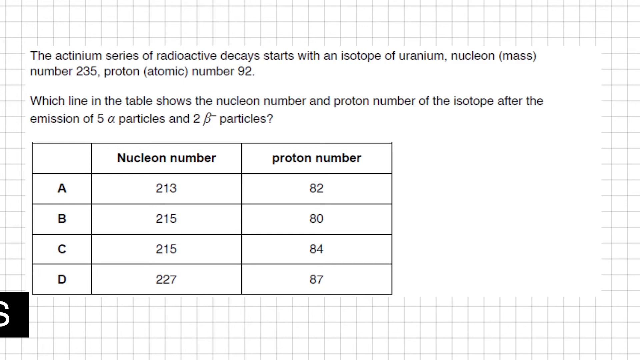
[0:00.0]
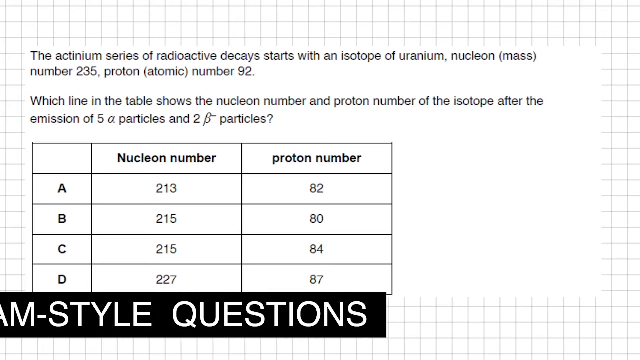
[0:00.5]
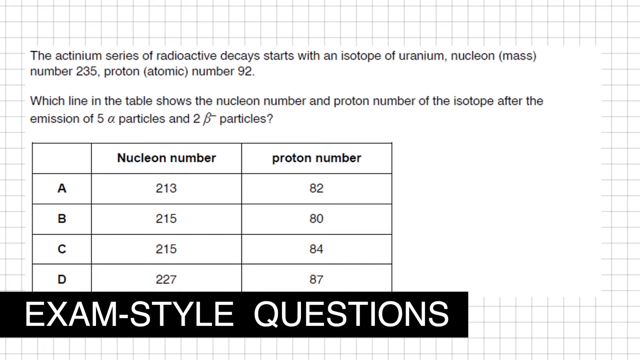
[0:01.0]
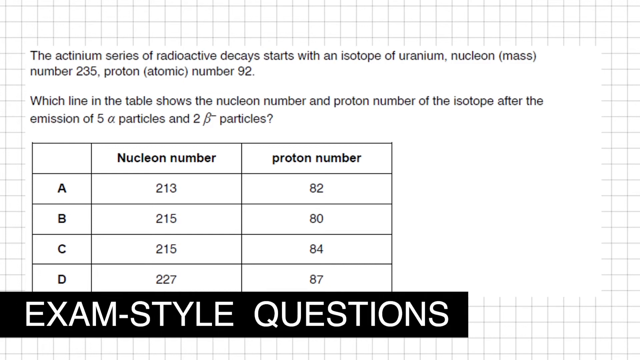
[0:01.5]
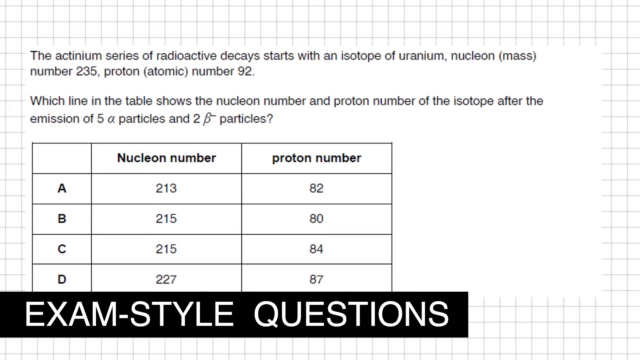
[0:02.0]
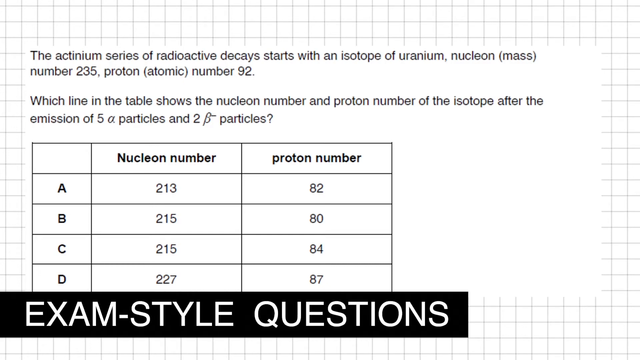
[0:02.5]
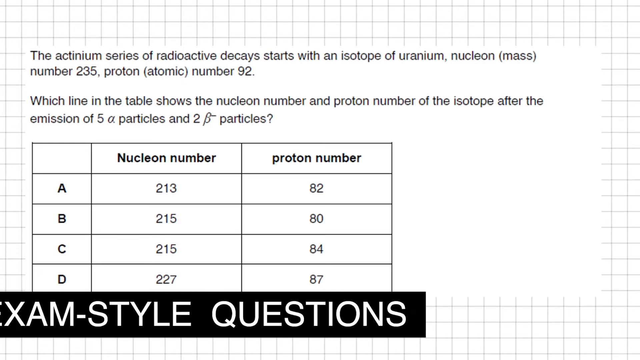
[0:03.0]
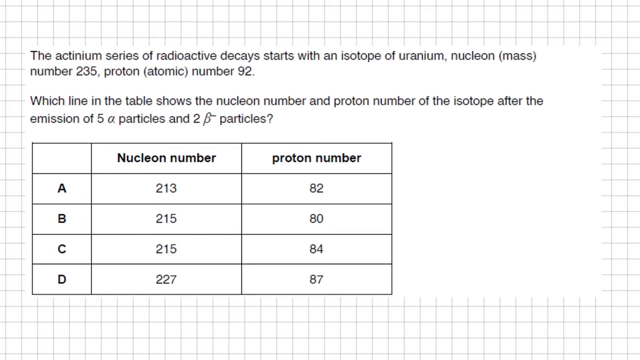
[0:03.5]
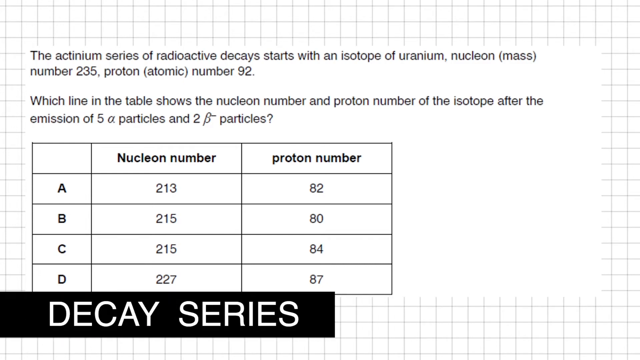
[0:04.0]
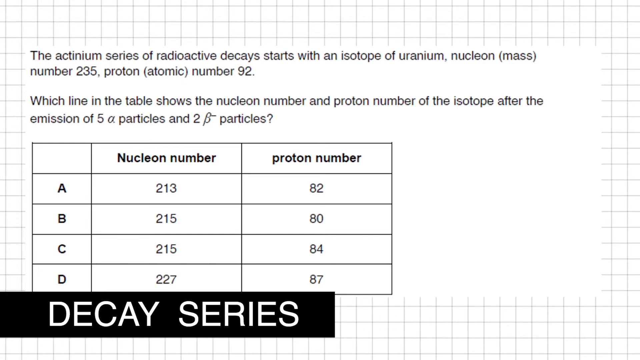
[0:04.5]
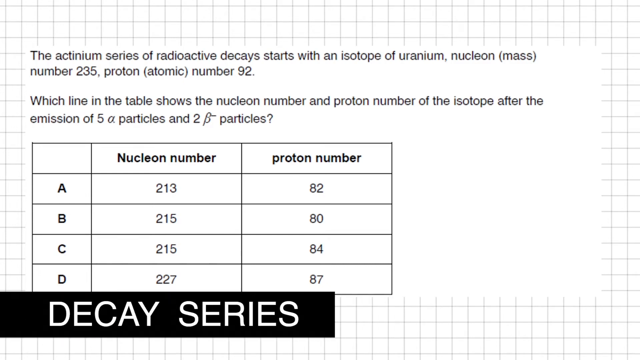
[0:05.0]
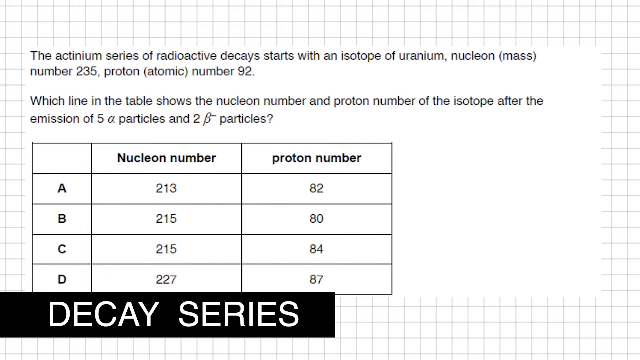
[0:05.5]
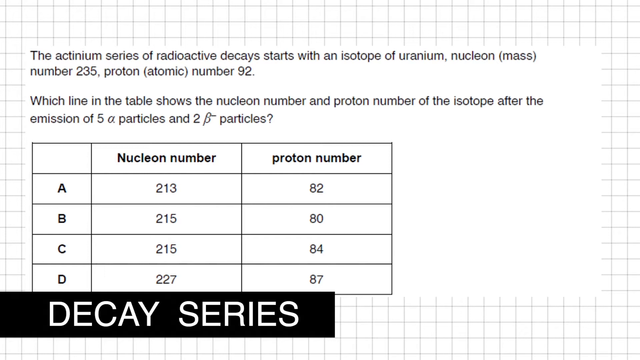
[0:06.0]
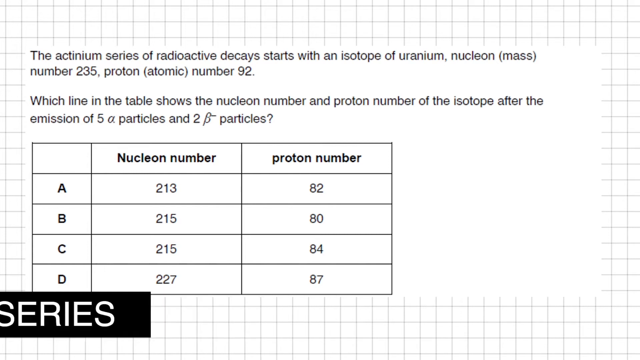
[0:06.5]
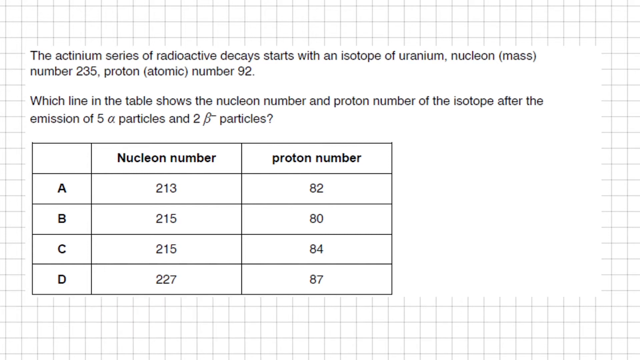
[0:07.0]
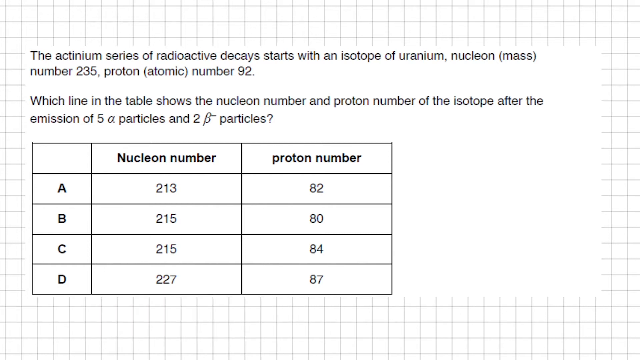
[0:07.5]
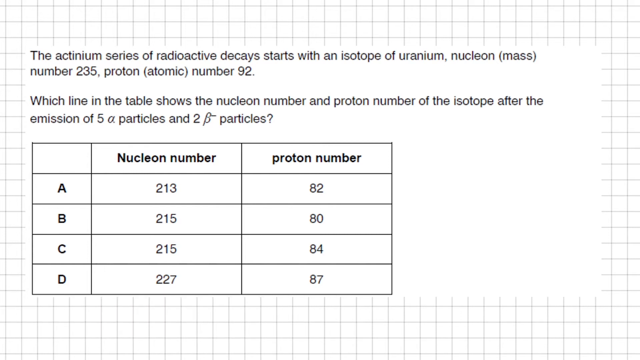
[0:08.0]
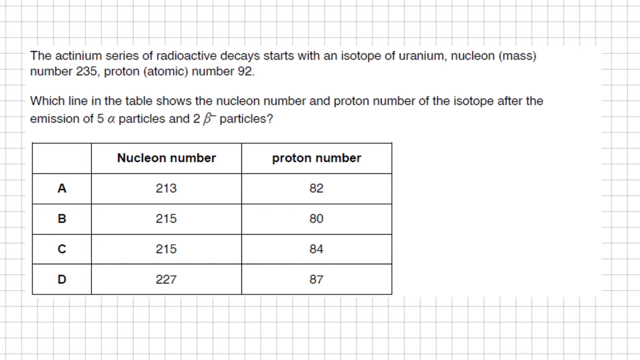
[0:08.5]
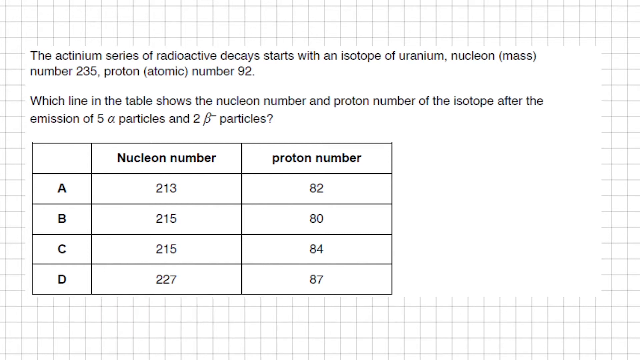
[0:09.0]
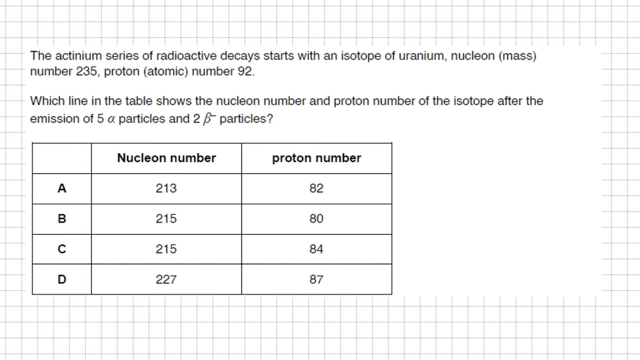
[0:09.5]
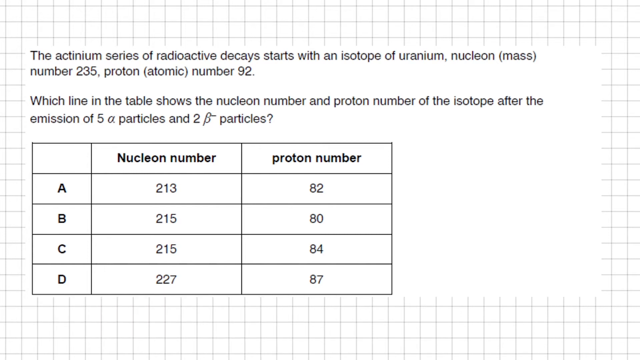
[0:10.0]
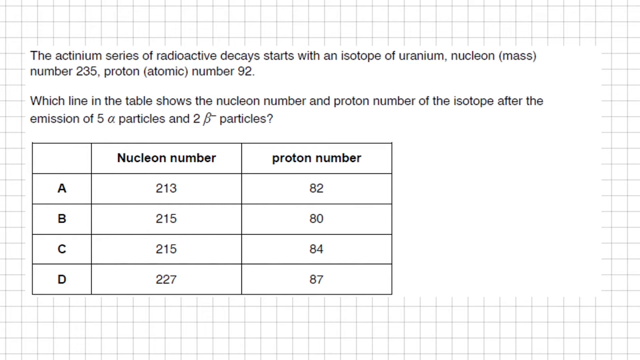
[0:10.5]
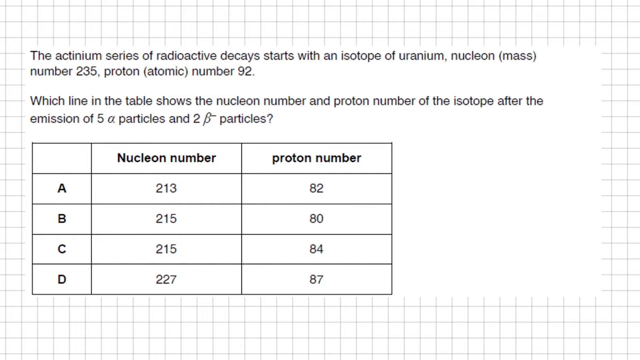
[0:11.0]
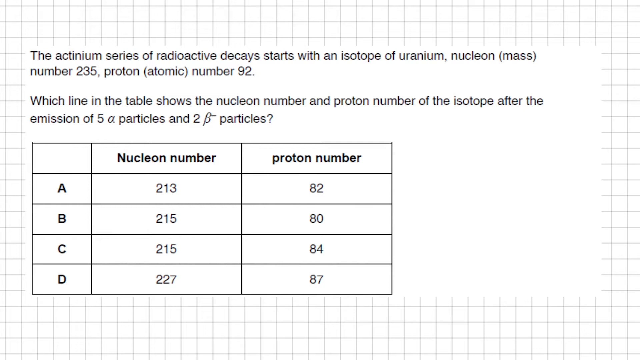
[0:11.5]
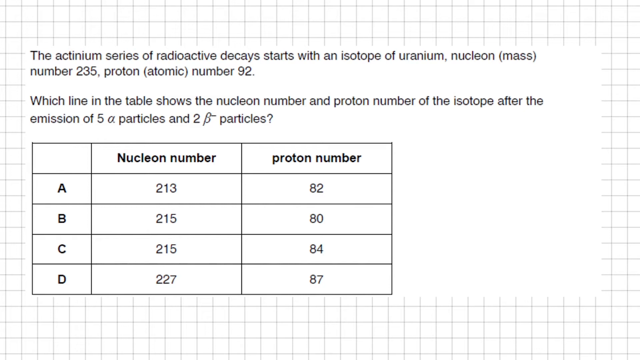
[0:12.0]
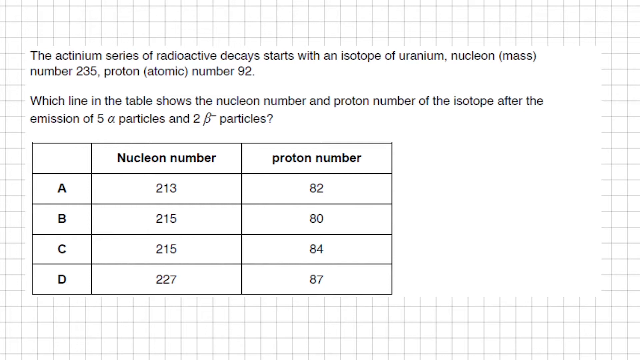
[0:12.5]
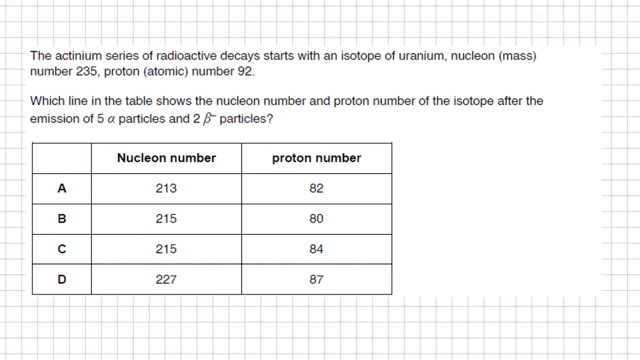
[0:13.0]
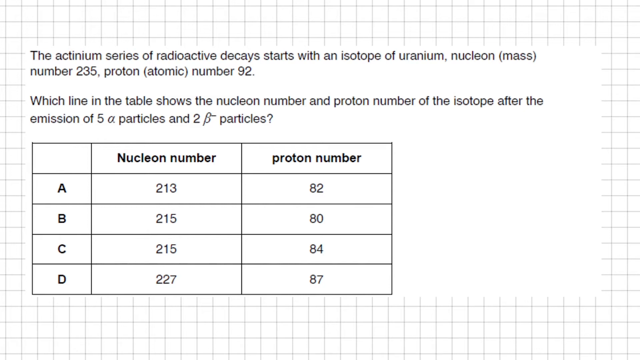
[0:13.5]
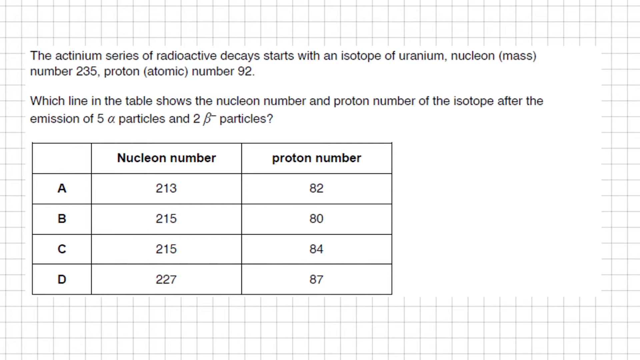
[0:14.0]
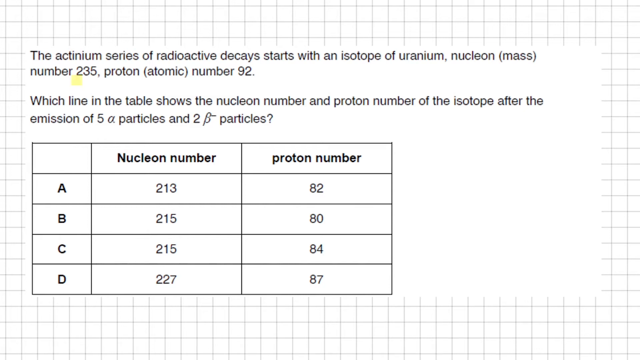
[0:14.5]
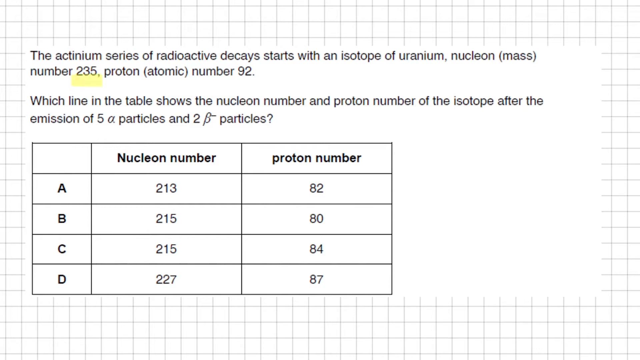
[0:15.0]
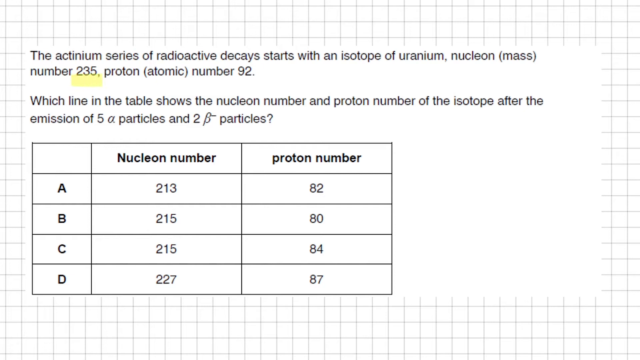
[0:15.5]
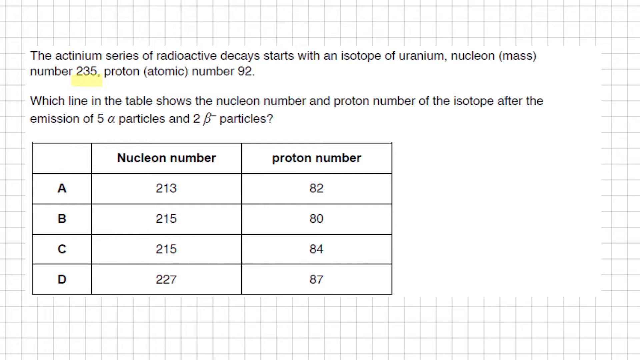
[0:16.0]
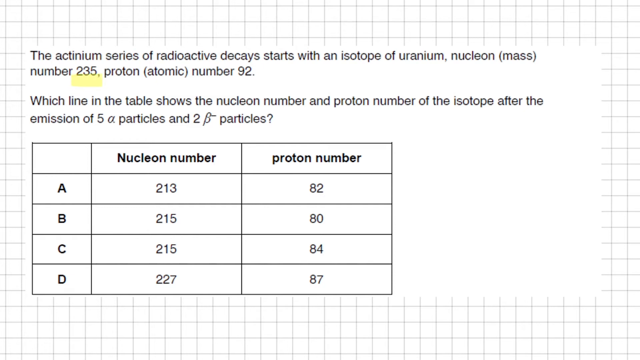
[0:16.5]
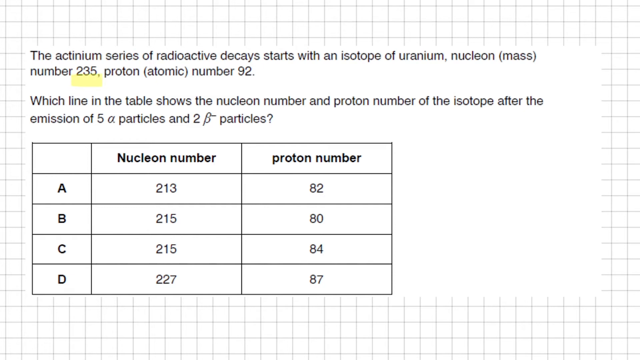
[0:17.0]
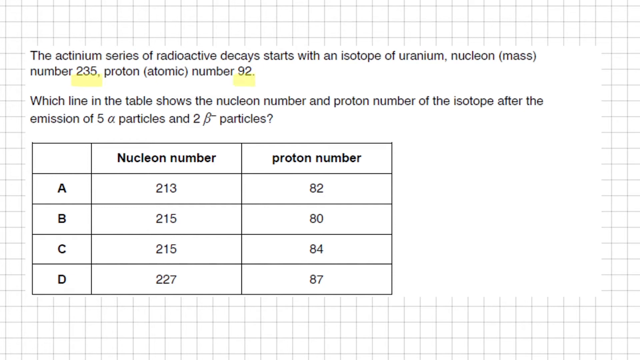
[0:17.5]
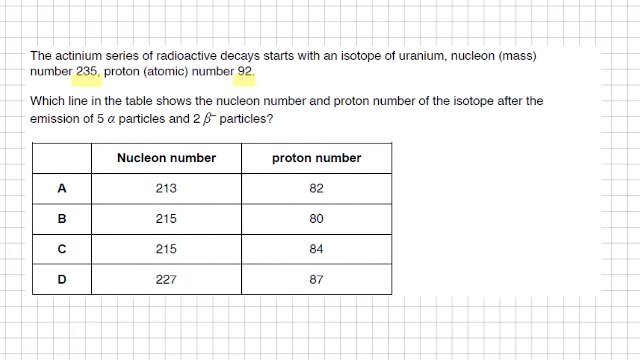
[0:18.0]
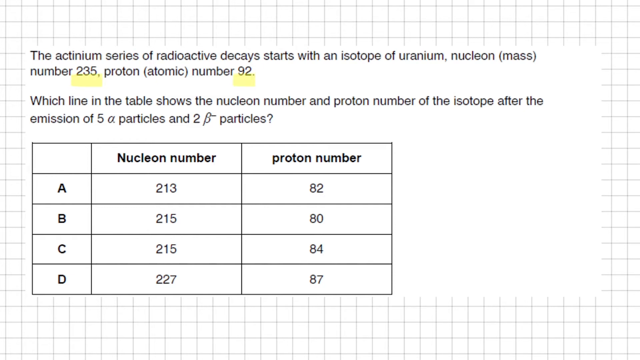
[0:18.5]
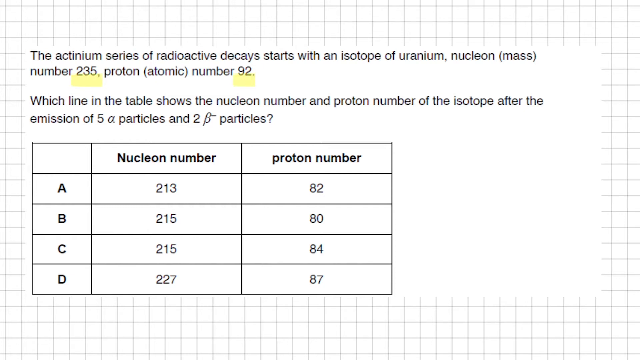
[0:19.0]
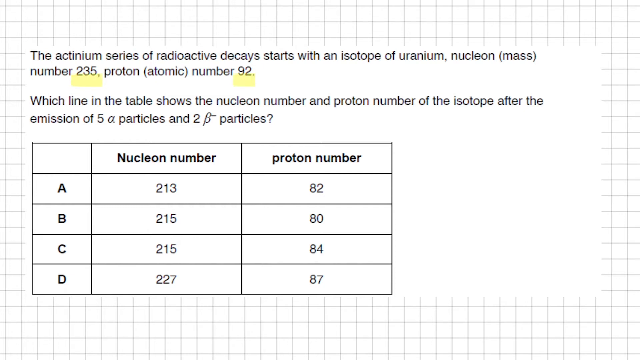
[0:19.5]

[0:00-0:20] A question about nucleon numbers and proton numbers is shown. Context is given, such as a nucleon number and a proton number, followed by a question asking which line in the table is the appropriate choice, with four options labeled A, B, C, and D. A black banner comes across the bottom stating that these are exam style questions. That banner disappears and a new banner replaces it, reading "decay series". The number 235 becomes underlined in the question, possibly indicating that it is an important part of the question. Nothing else changes on the screen. The question is written in simple black text over white, and in the background there is a black and white grid pattern similar to graph paper. Aside from the highlighting of the number 235, nothing else moves.